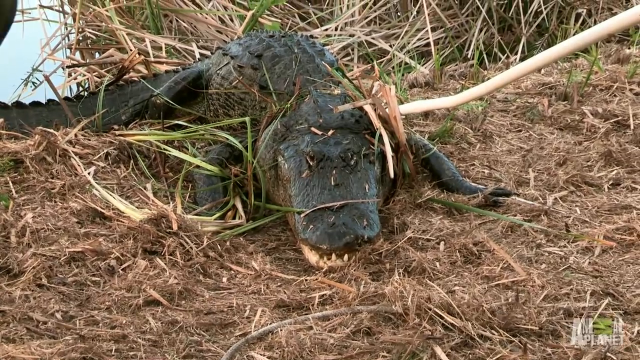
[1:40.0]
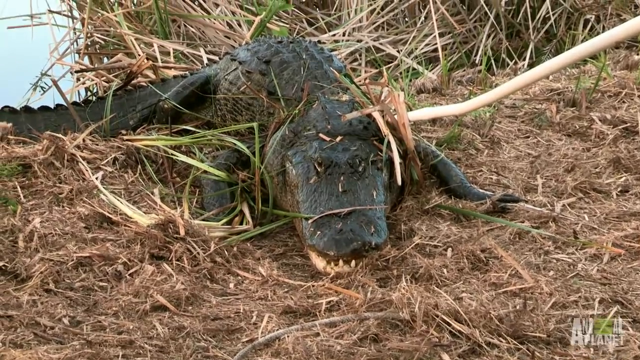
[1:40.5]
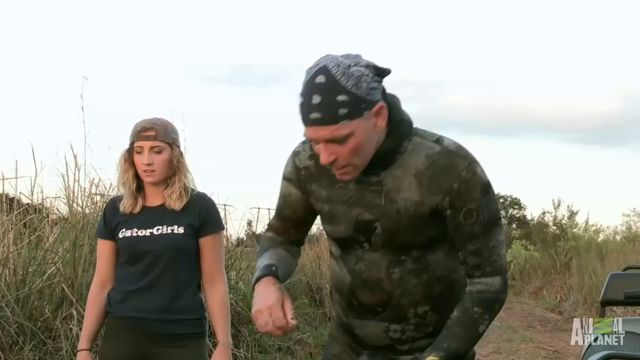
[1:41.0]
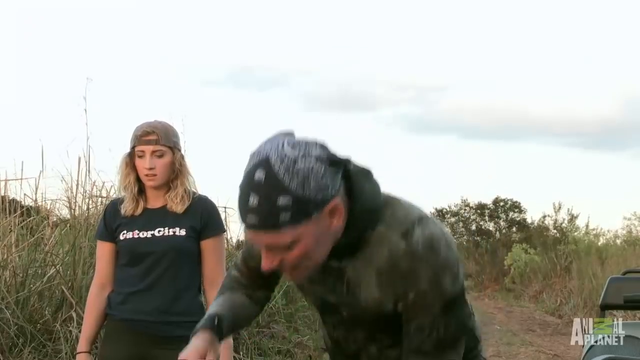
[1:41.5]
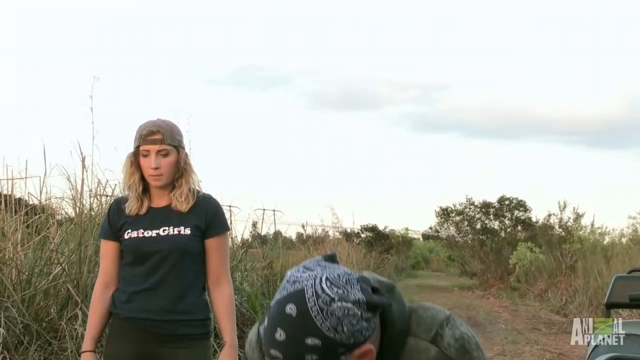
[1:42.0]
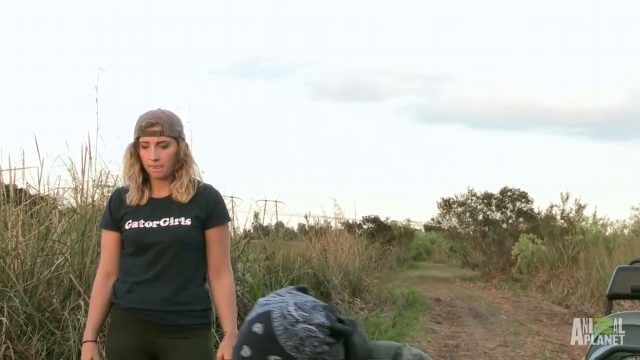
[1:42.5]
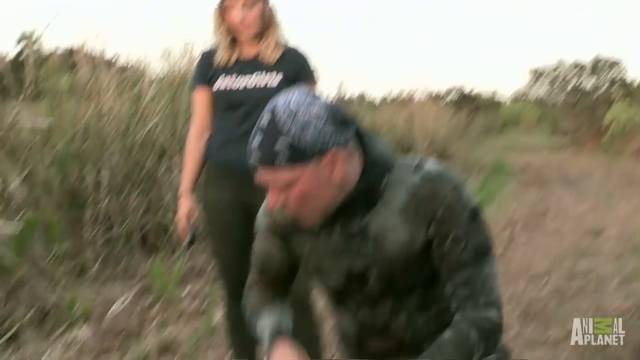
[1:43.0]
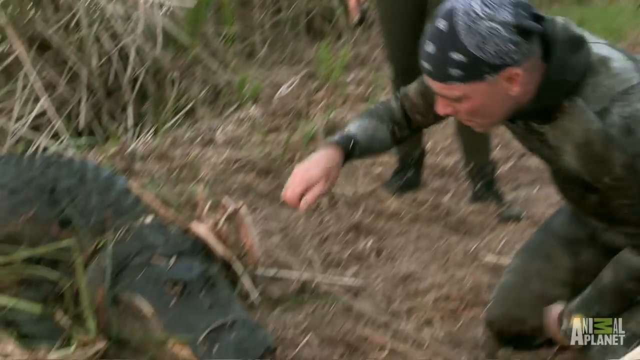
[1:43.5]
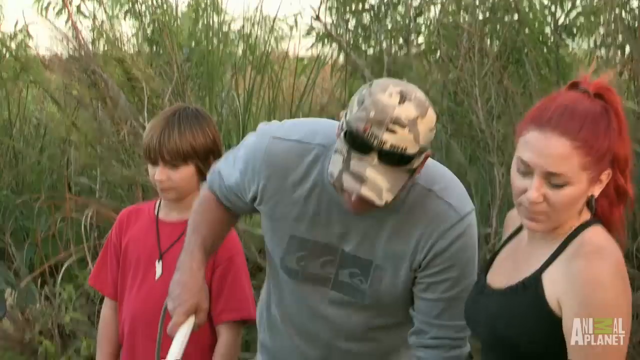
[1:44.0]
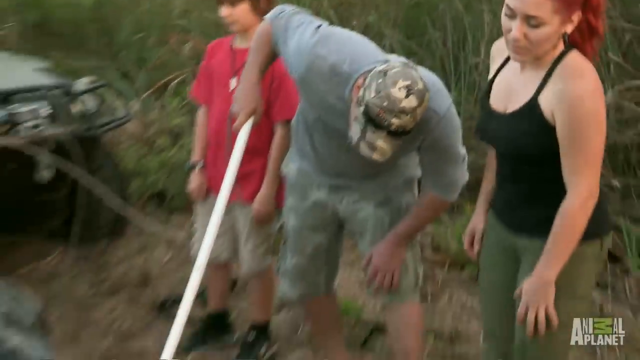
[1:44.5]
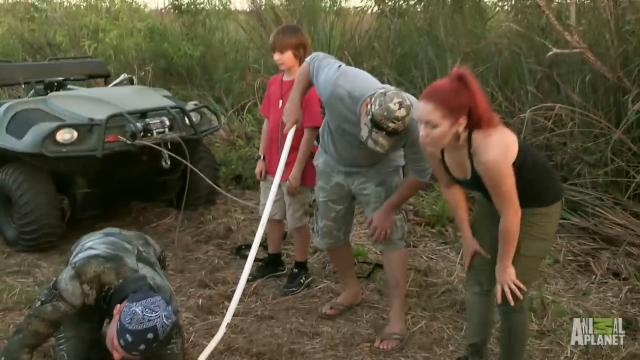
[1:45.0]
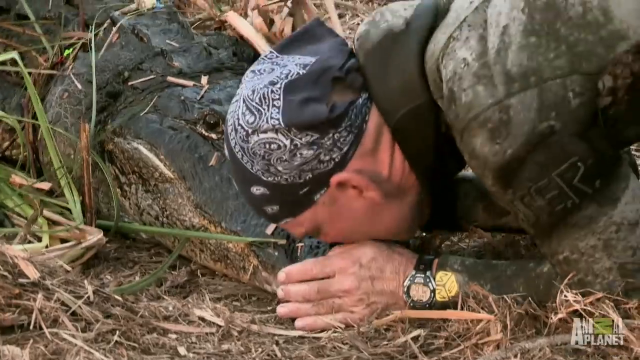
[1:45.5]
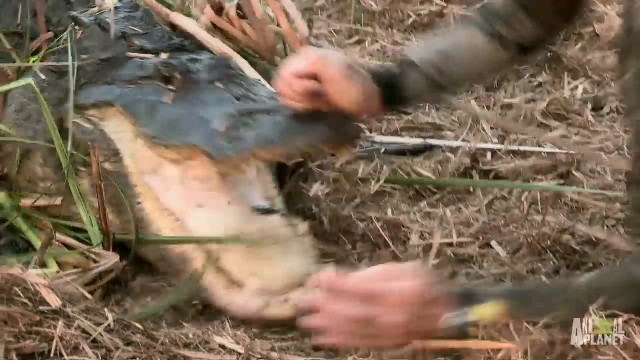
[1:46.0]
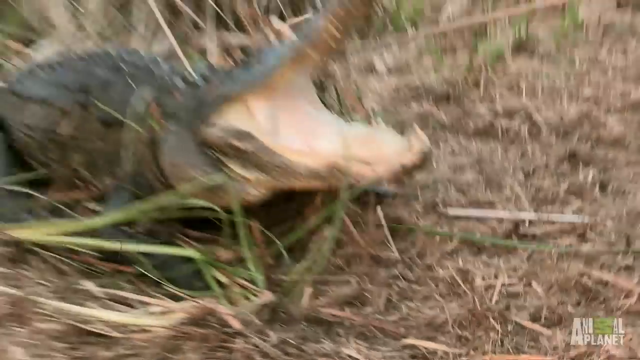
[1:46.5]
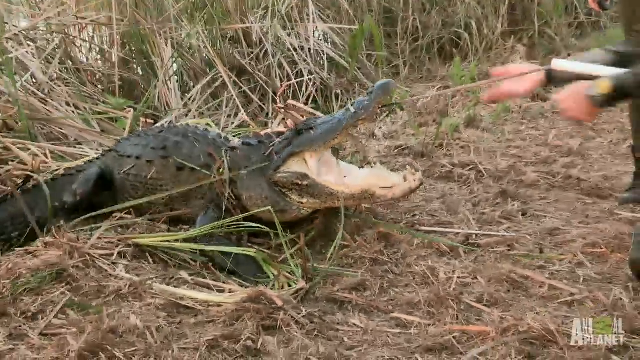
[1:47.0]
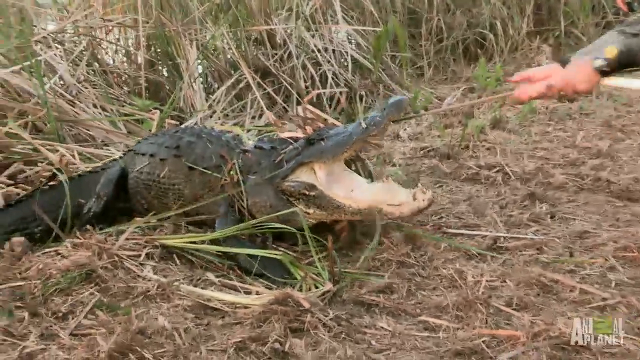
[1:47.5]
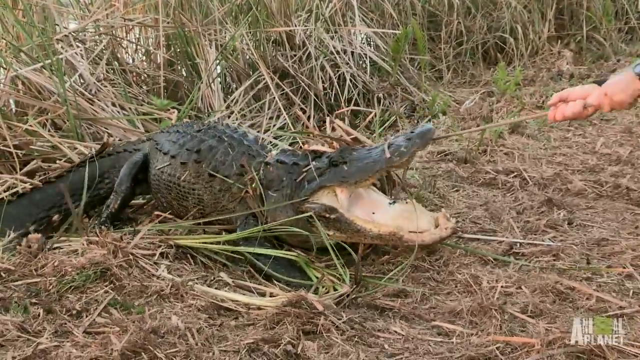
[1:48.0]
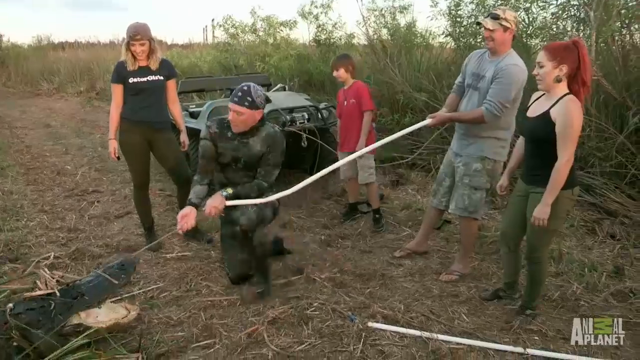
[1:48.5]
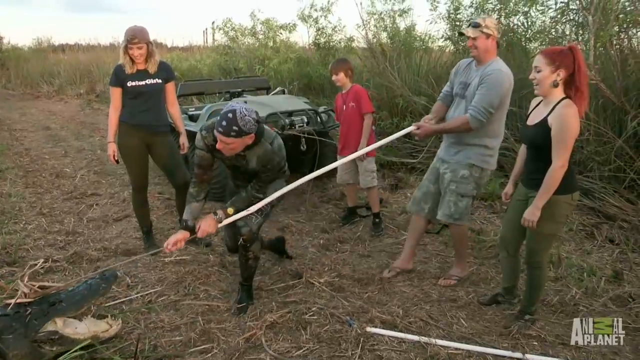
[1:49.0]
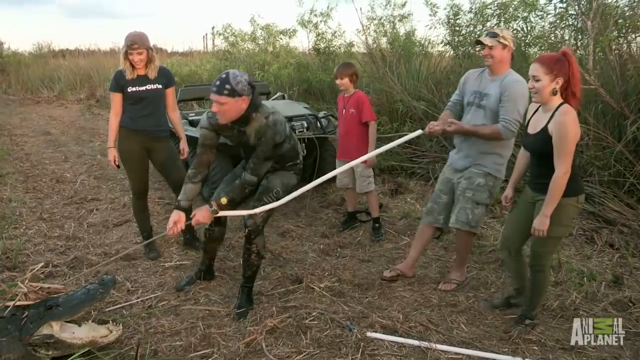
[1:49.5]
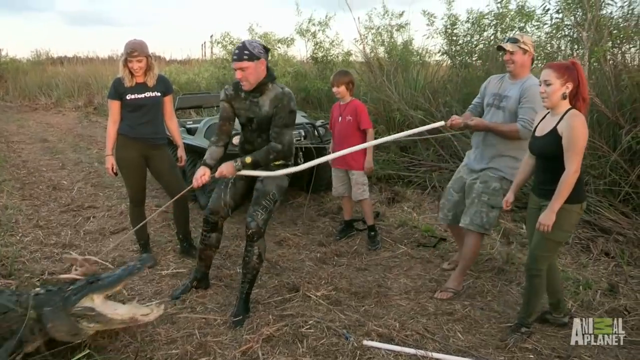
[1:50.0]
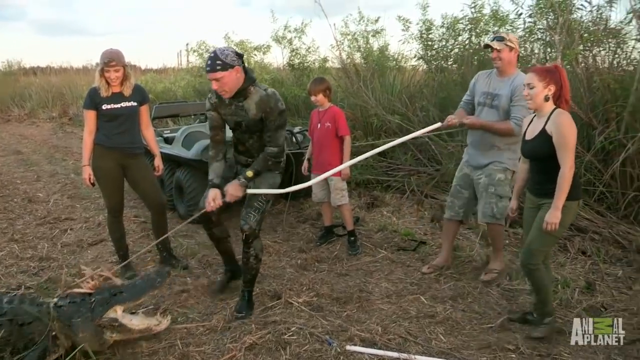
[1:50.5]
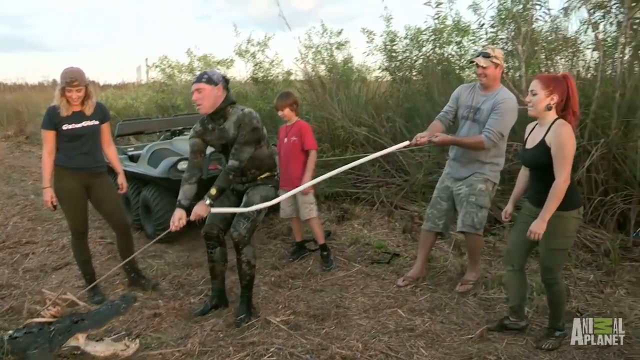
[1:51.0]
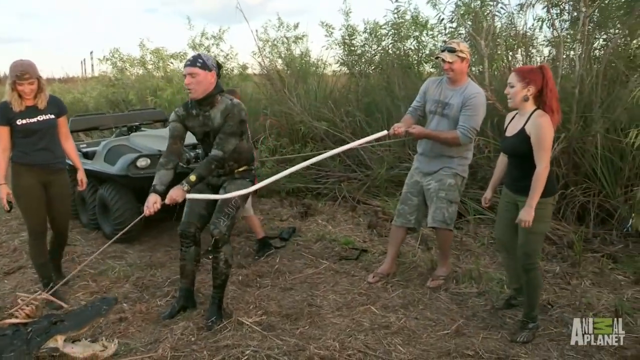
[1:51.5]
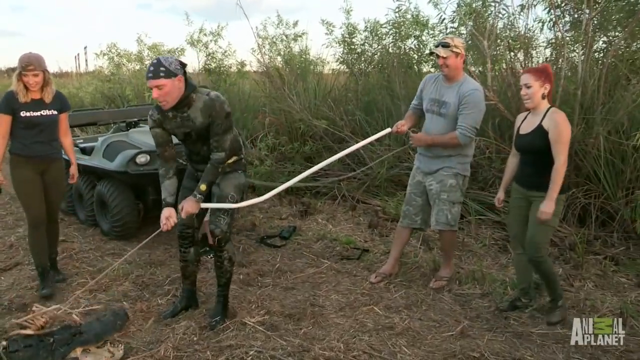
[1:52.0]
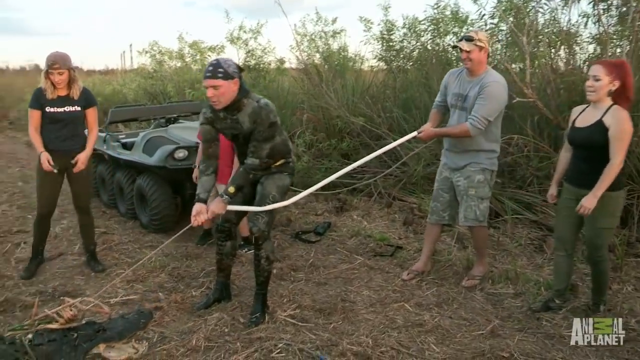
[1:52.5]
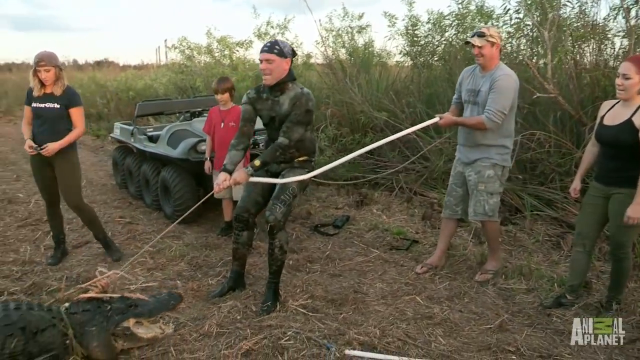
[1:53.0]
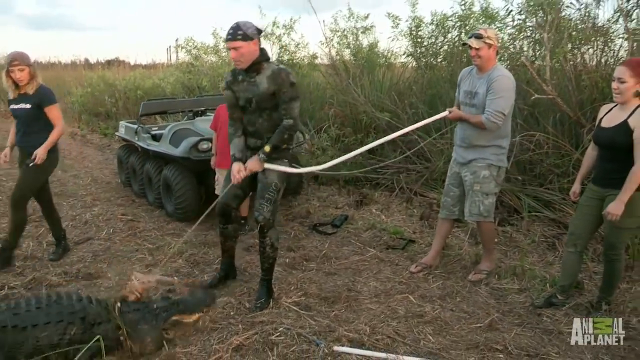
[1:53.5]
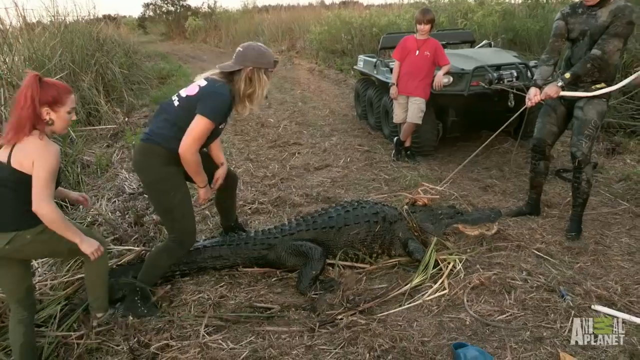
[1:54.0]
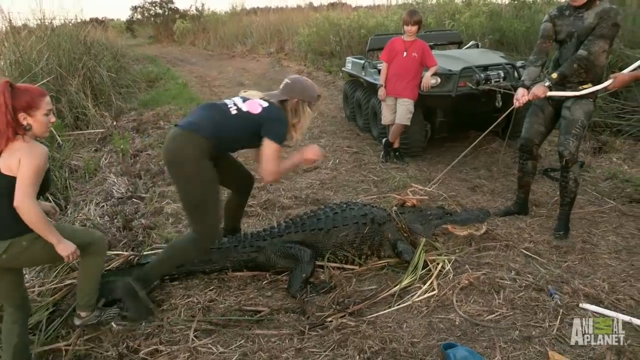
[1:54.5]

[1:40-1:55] A close-up shows the very dark green alligator laying near the reeds, just over them. It has a very large head and looks to be bigger than the man in the wetsuit behind it; its eyes are very close together. The rope is secured around the alligator, which lays still, appearing exhausted. The camera switches to the man in the wetsuit and bandana crouching down with a woman standing behind him, then to three people: the young child, the man in gray and the redheaded girl. The man leans down, checks the alligator and touches its snout. The alligator rears back and opens its mouth threateningly; the man moves back slightly, and the alligator moves back slightly, leaving its mouth wide open.